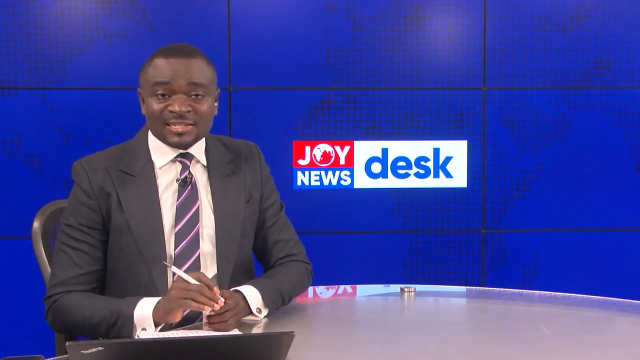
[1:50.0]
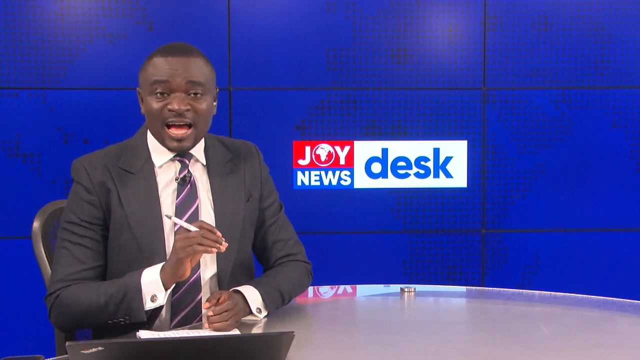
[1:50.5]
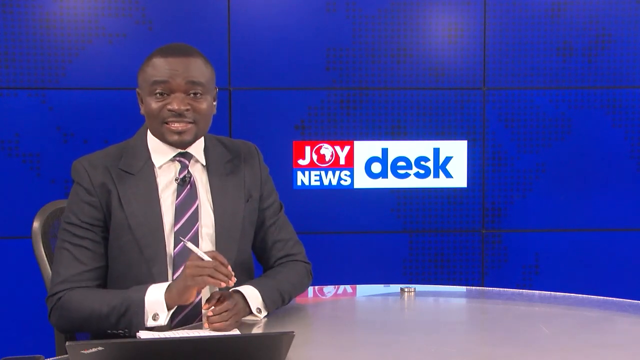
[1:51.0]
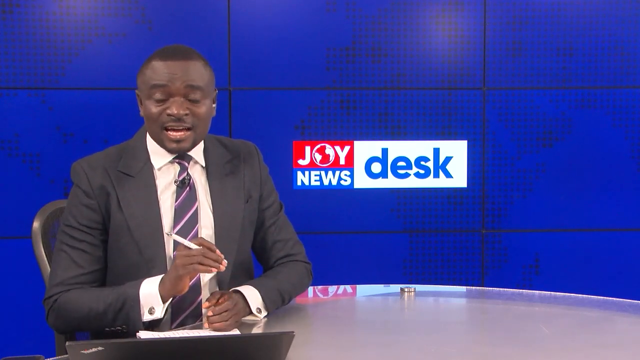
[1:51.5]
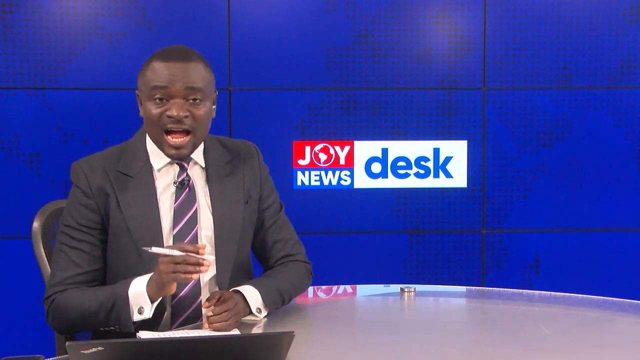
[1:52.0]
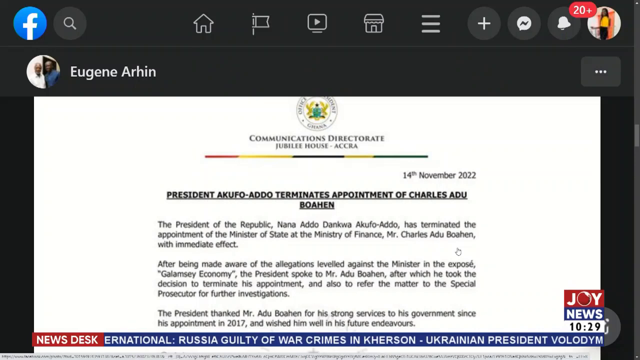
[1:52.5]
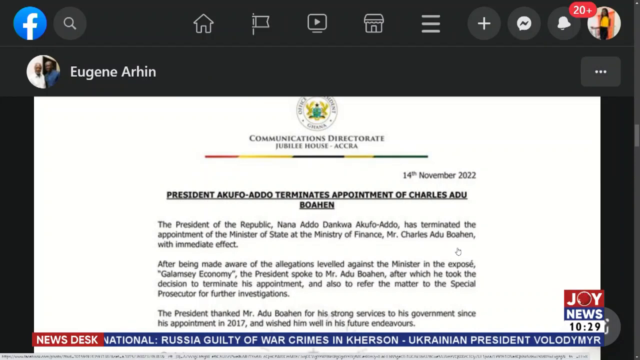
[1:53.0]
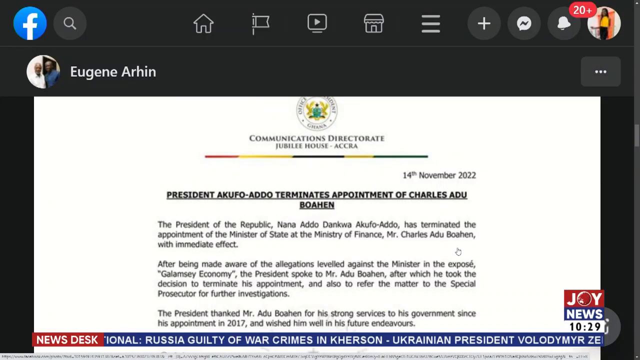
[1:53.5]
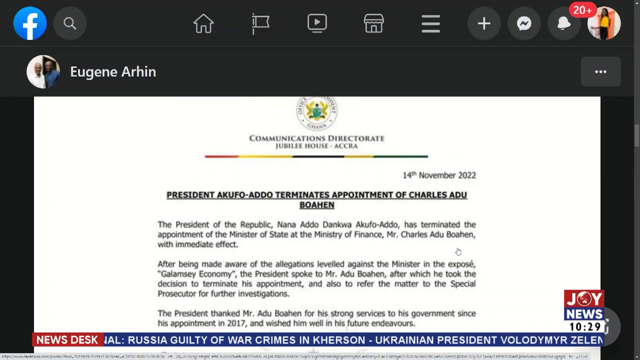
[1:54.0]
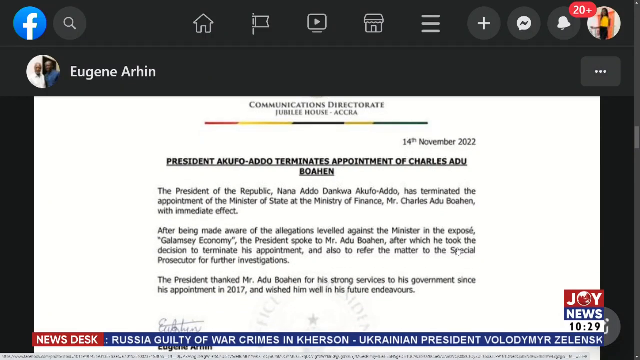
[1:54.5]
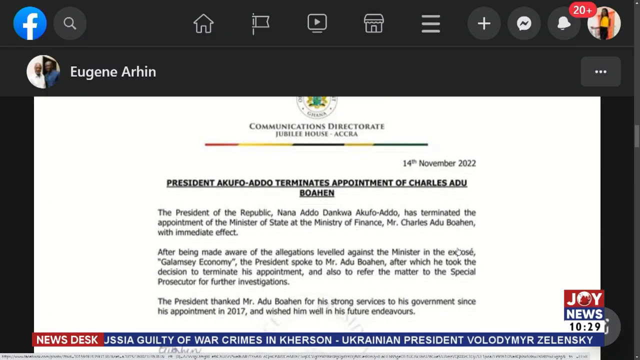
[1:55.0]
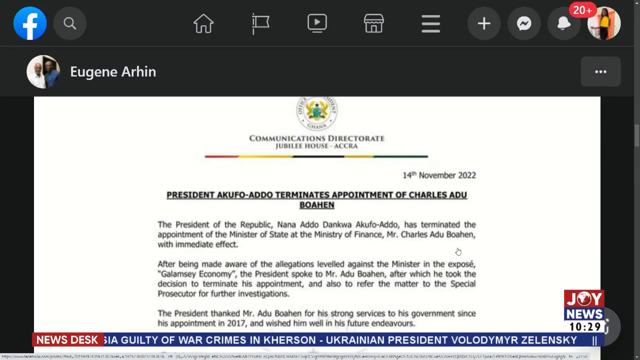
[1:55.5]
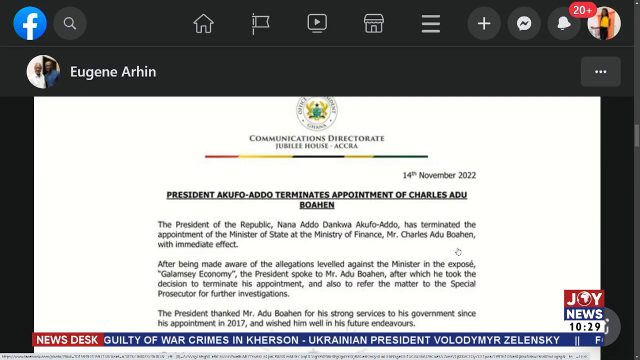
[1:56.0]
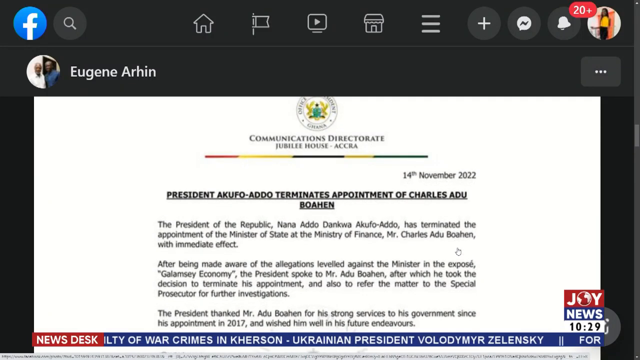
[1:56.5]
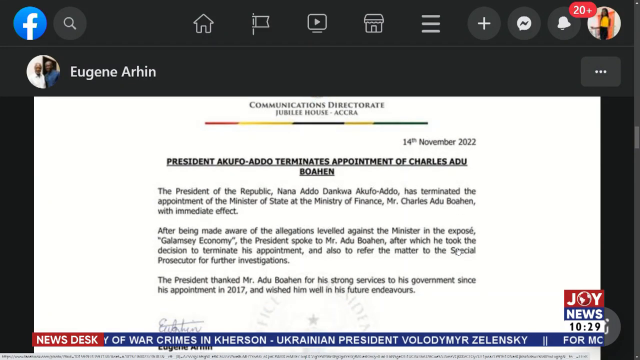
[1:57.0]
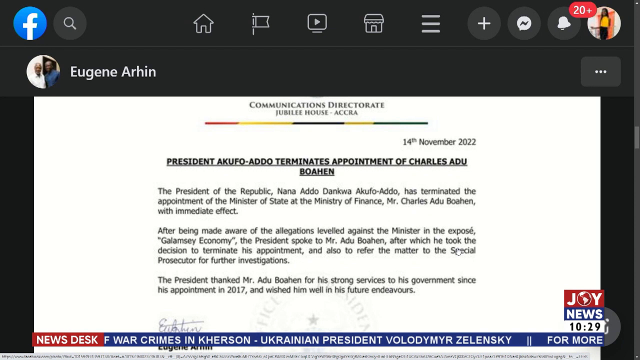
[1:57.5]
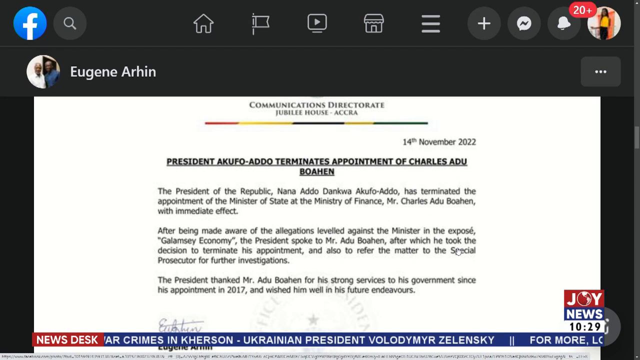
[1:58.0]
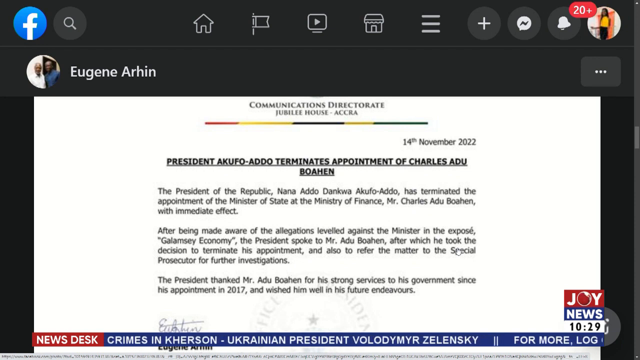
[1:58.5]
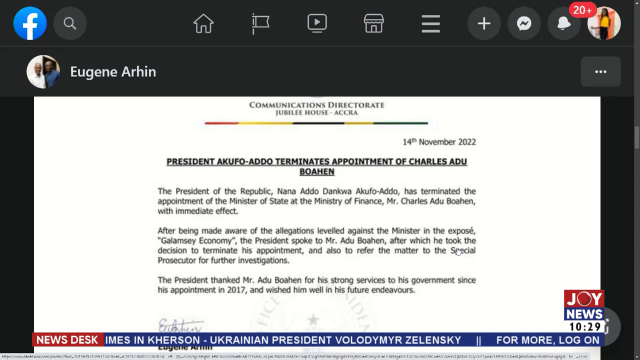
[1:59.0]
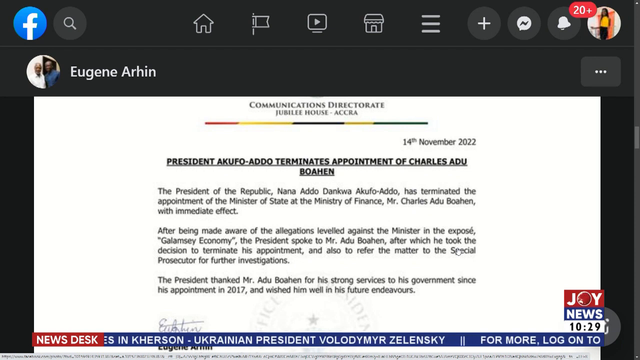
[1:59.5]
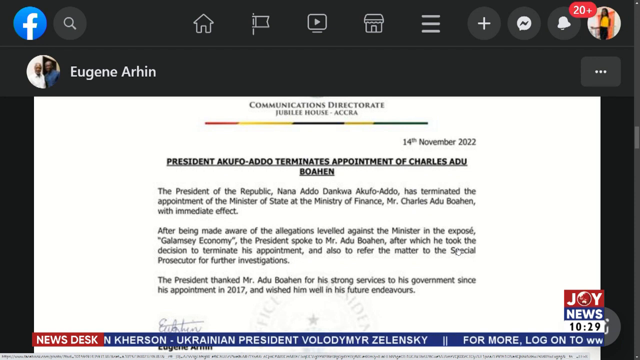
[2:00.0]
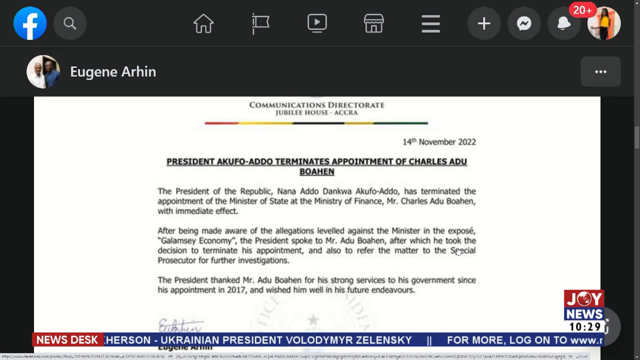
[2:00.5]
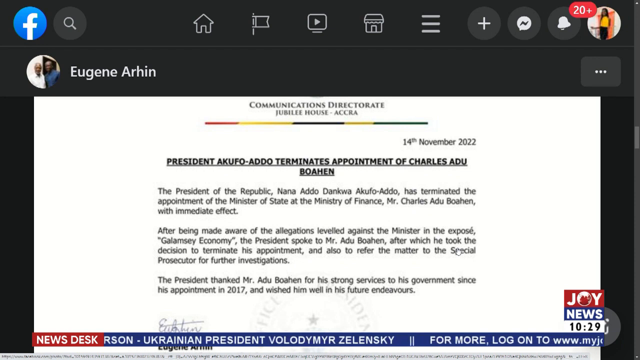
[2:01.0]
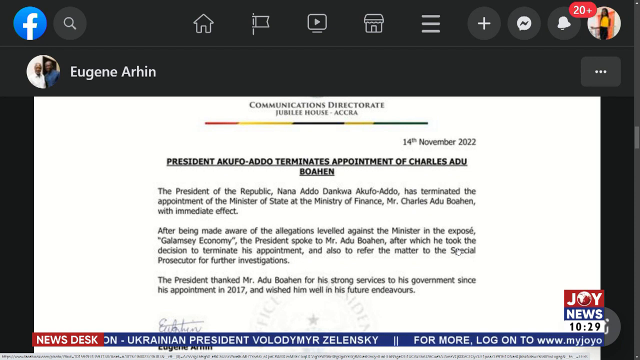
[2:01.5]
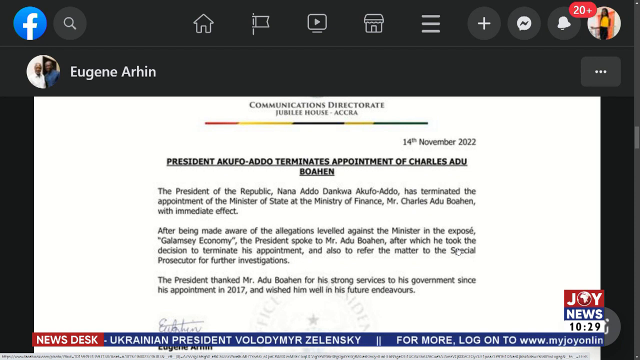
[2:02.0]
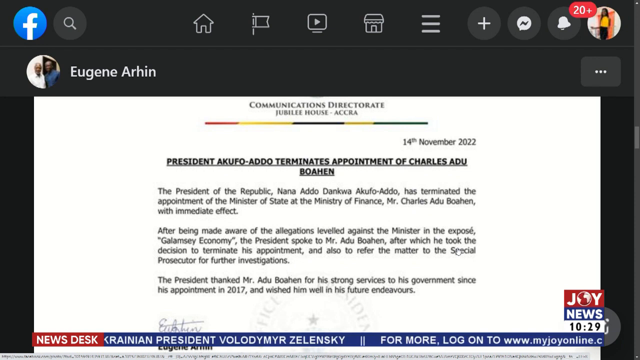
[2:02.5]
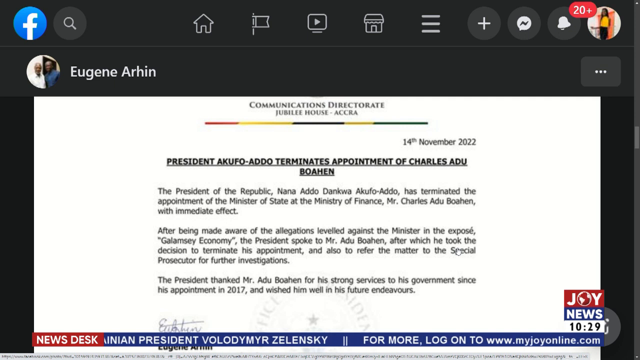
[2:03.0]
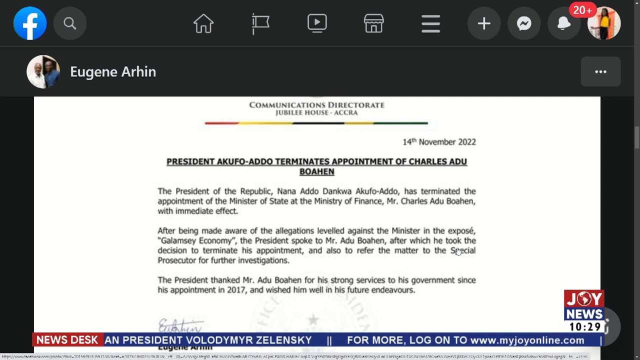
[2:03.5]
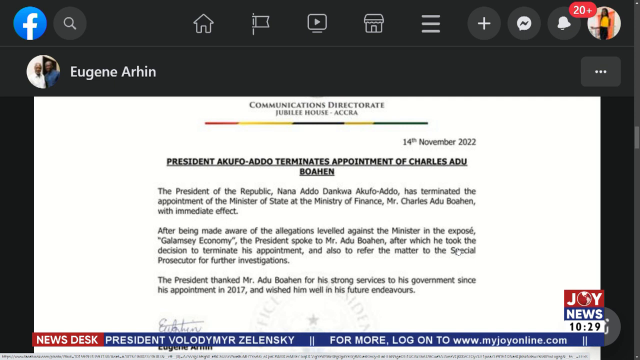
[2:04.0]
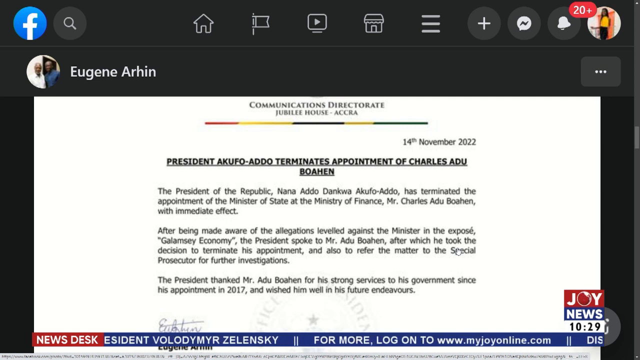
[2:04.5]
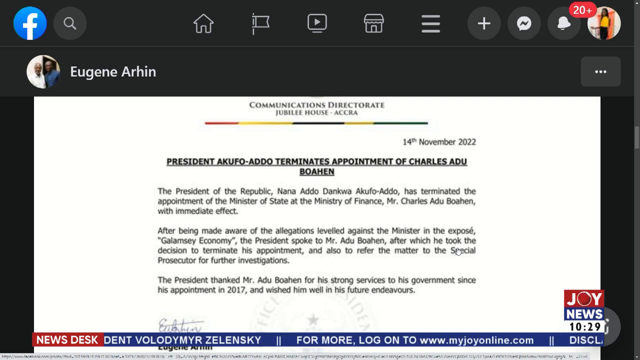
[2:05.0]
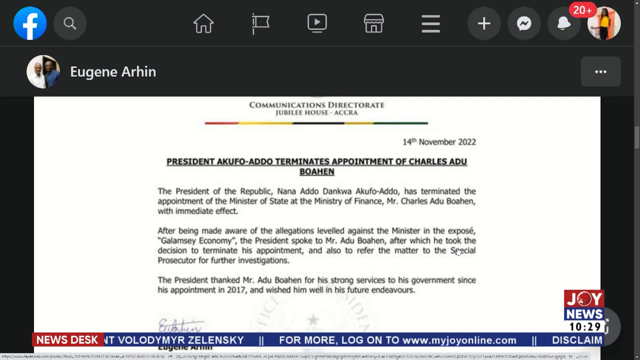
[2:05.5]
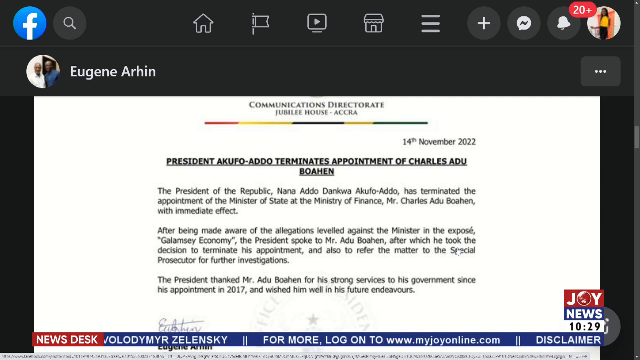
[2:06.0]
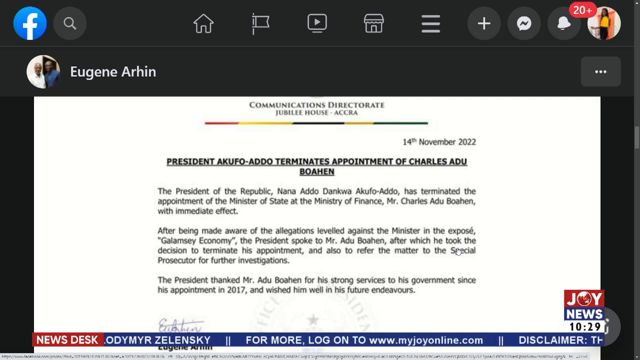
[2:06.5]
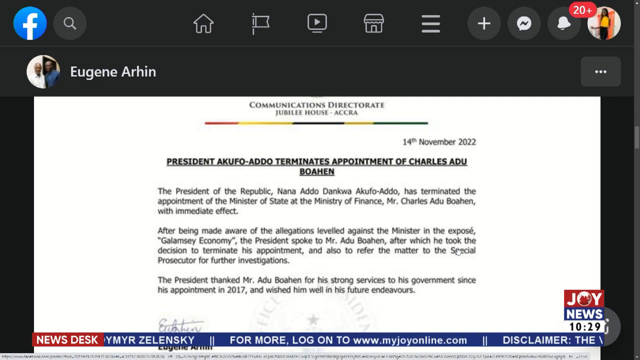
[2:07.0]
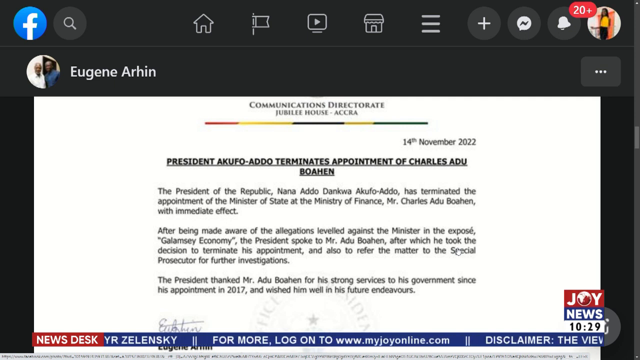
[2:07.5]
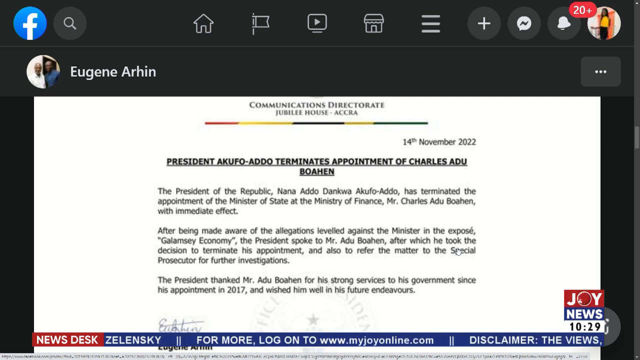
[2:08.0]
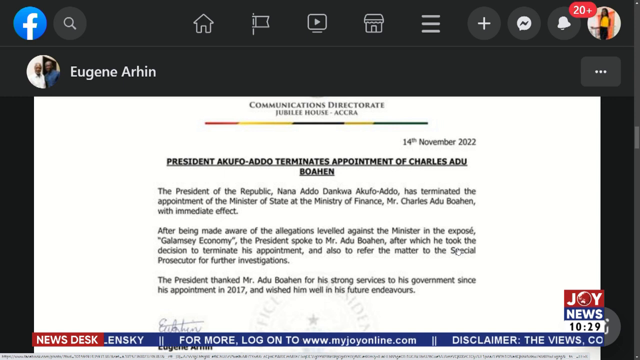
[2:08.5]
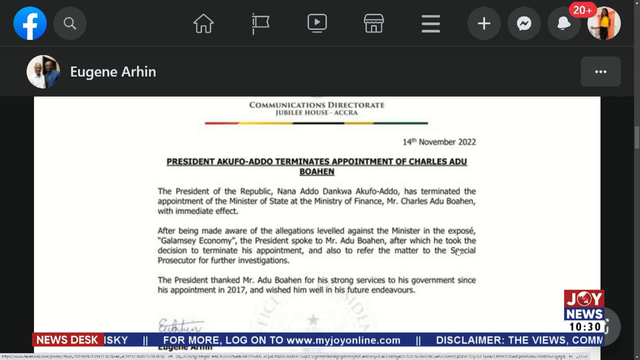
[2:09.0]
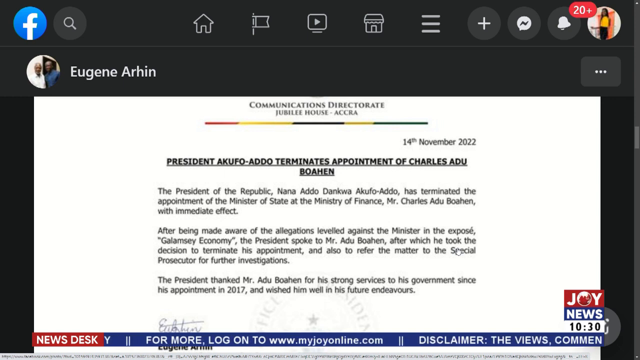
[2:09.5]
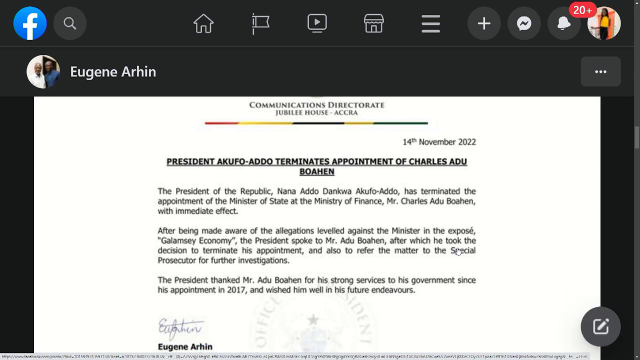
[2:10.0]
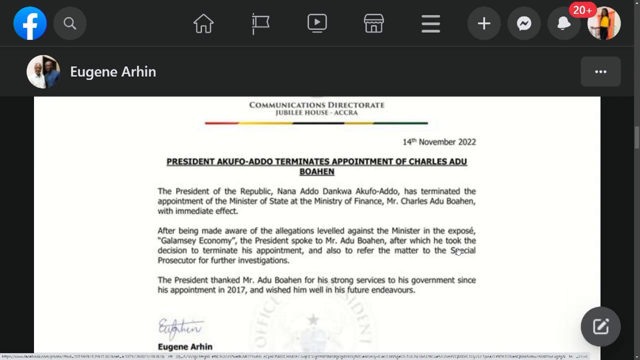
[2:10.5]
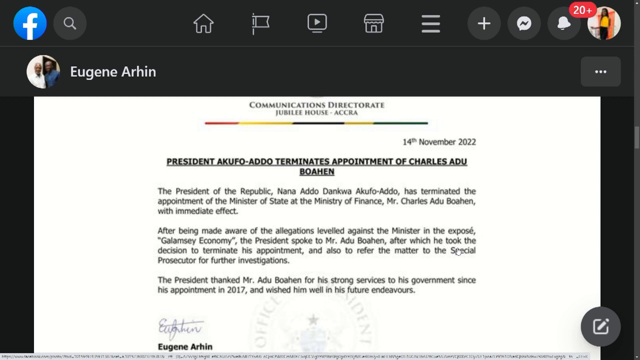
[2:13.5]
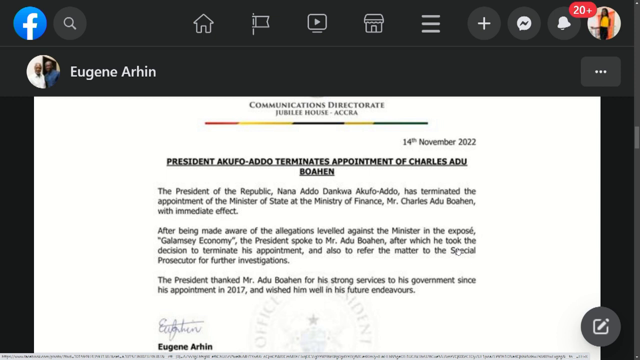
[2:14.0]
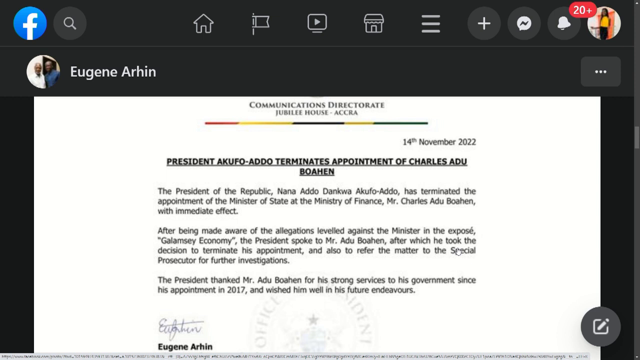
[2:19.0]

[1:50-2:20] Still part of the newscast, a screenshot of a Facebook post from Eugene Arhin is shown. It is from the Communications Directorate, Jubilee House, Accra, and the headline reads "President Akufo Addo terminates appointment of Charles Adu Boahen." The text continues: "The President of the Republic, Nana Addo Dankwa Akufo-Addo has terminated the appointment of the Minister of State at the Ministry of Finance, Mr. Charles Adu Boahen, with immediate effect. After being made aware of the allegations leveled against the minister in the expose, Galamsey Economy, the President spoke to Mr. Adu Boahen, after which he took the decision to terminate his appointment, and also to refer the matter to the special prosecutor for further investigations." It also states that the President thanked Mr. Adu Boahen for his services since his appointment in 2017 and wished him well, and it is dated the 14th of November, 2022. A colorful line of red, yellow, purple and apparently green runs across the Communications Directorate, Jubilee House, Accra heading.